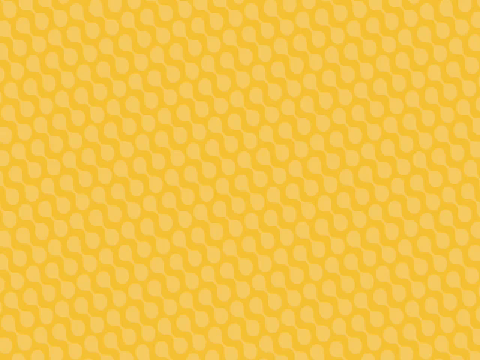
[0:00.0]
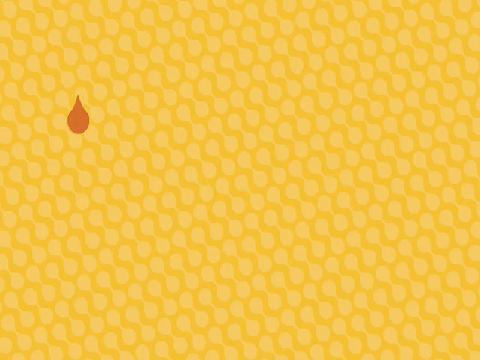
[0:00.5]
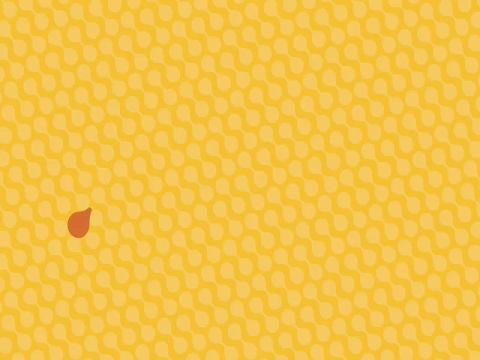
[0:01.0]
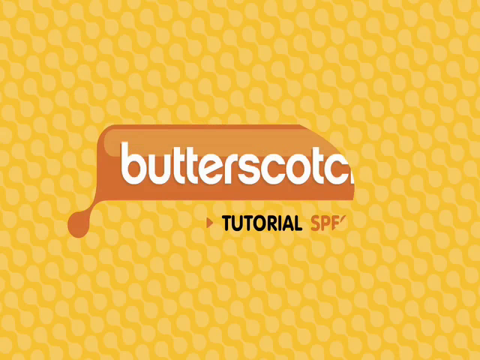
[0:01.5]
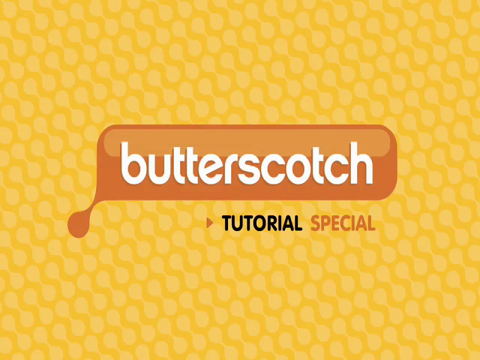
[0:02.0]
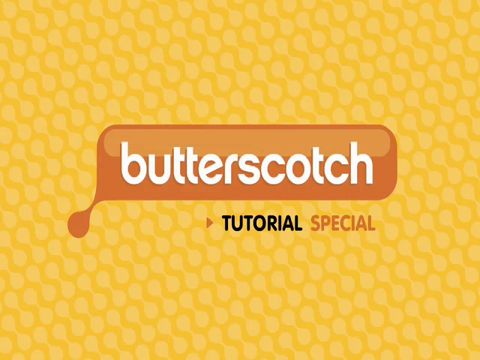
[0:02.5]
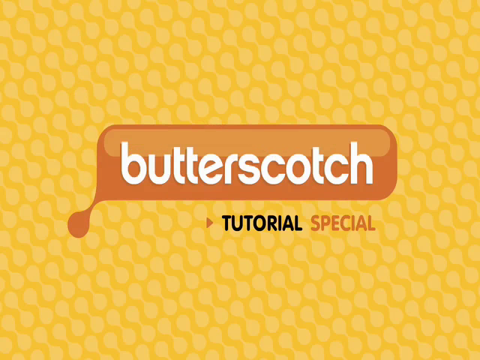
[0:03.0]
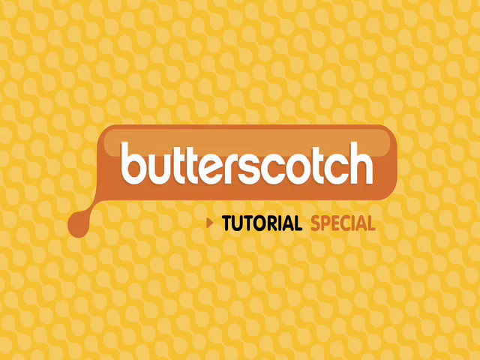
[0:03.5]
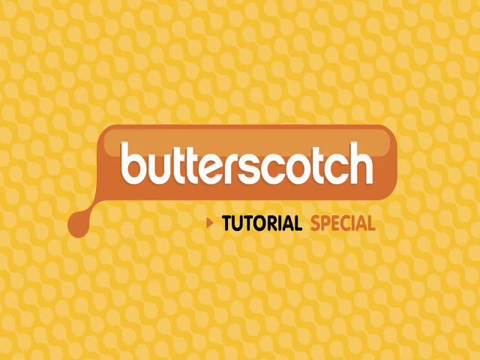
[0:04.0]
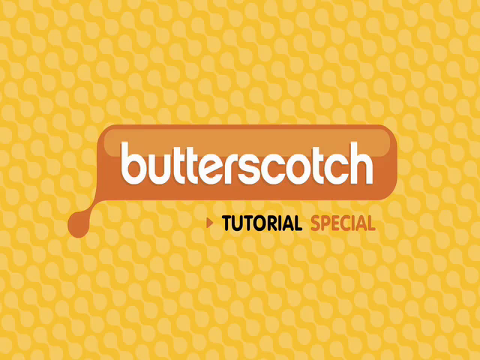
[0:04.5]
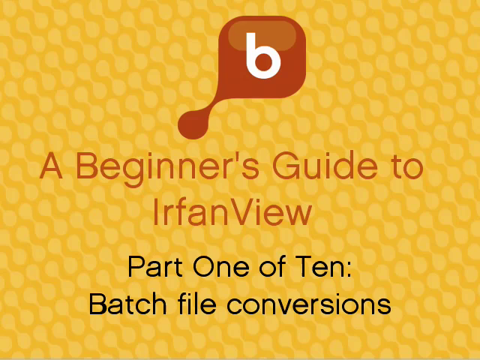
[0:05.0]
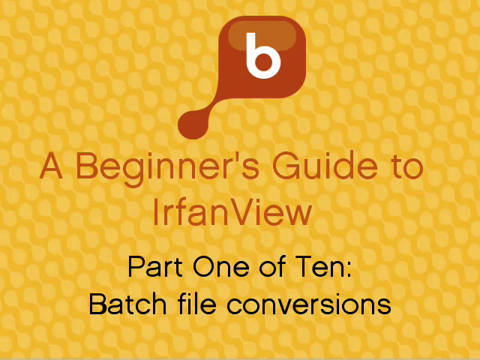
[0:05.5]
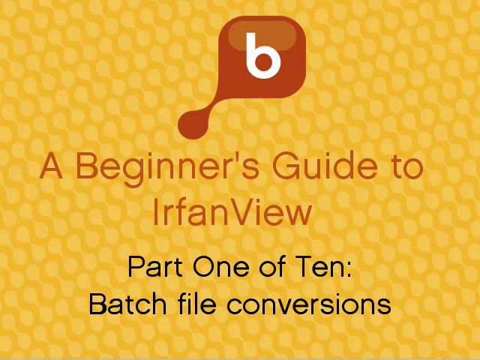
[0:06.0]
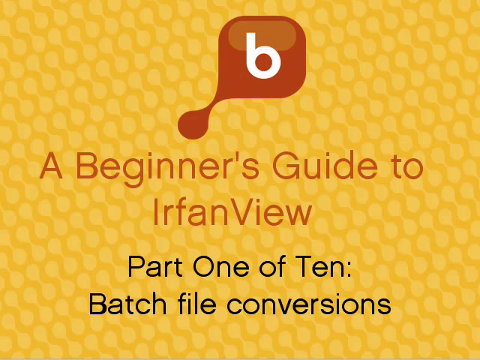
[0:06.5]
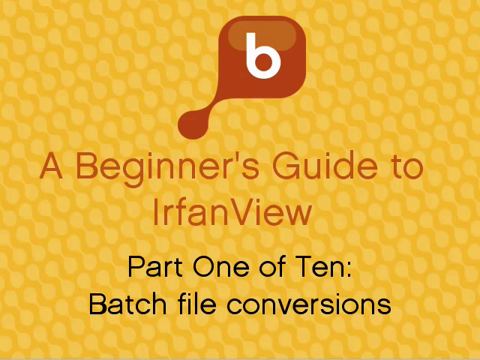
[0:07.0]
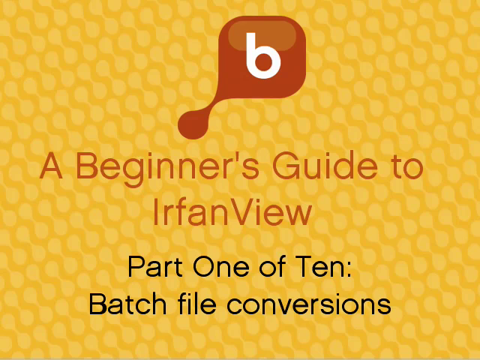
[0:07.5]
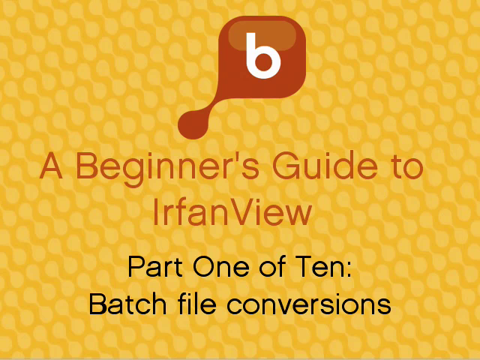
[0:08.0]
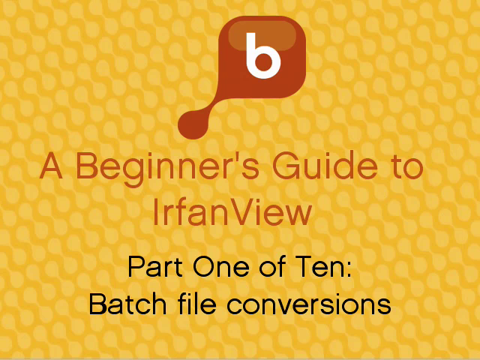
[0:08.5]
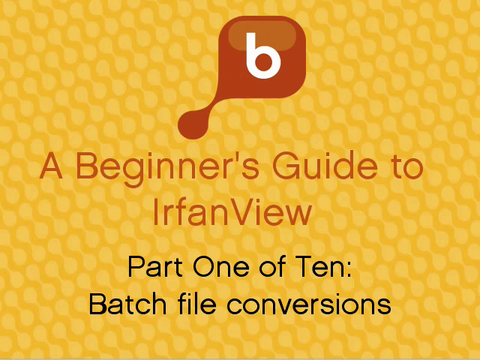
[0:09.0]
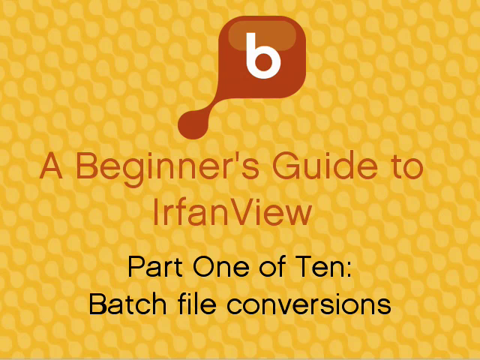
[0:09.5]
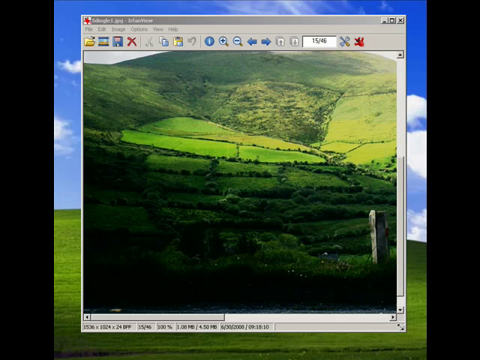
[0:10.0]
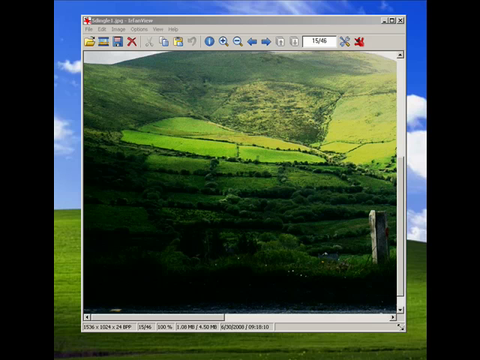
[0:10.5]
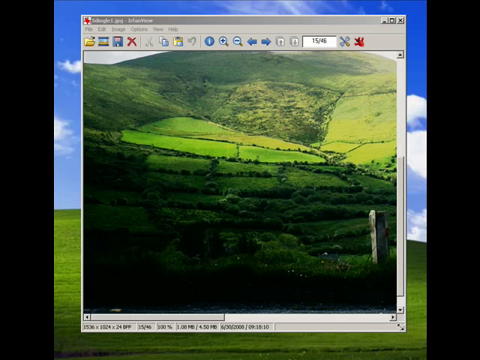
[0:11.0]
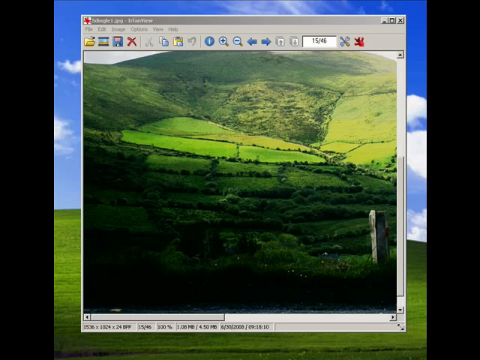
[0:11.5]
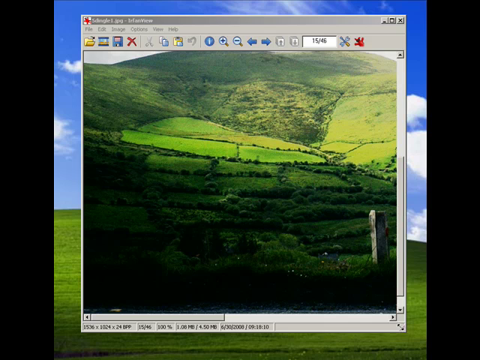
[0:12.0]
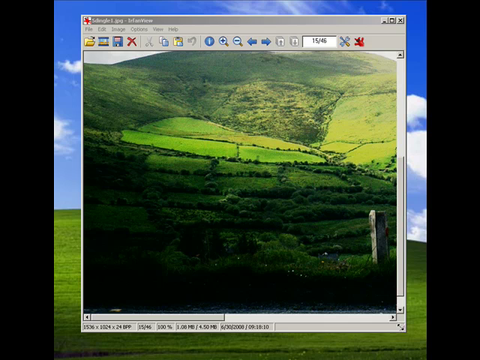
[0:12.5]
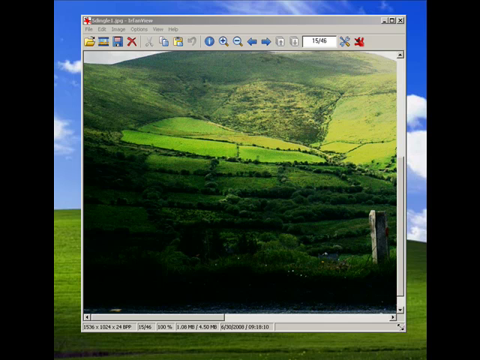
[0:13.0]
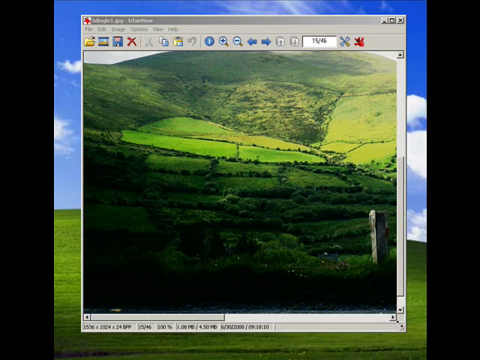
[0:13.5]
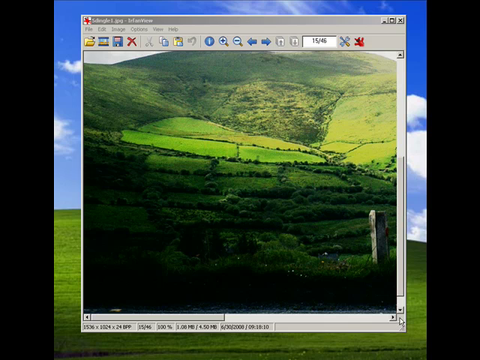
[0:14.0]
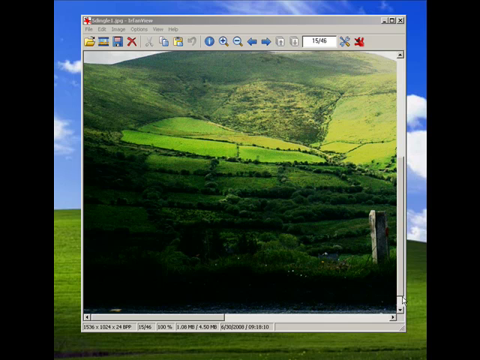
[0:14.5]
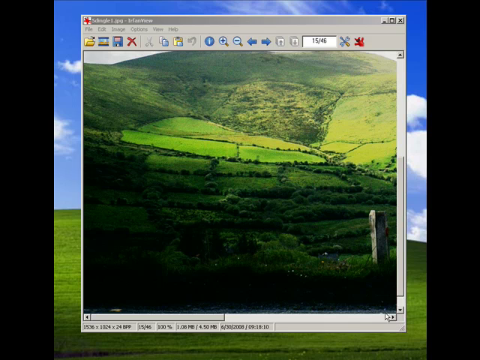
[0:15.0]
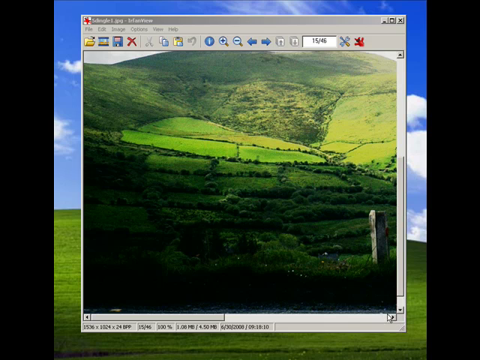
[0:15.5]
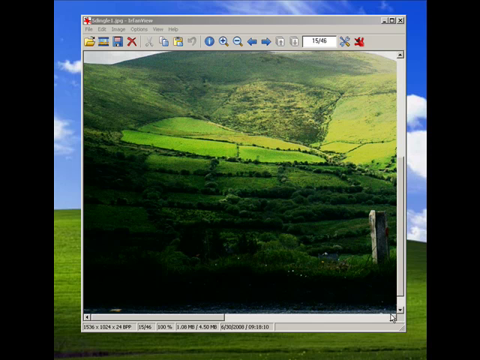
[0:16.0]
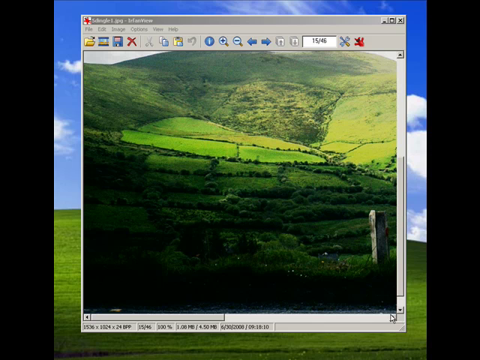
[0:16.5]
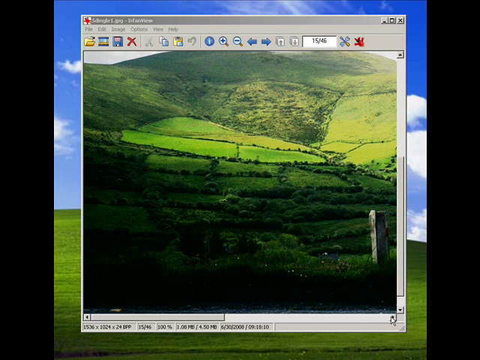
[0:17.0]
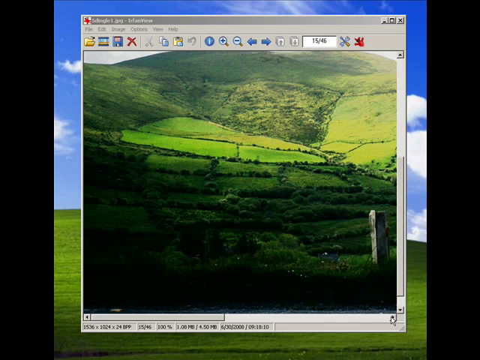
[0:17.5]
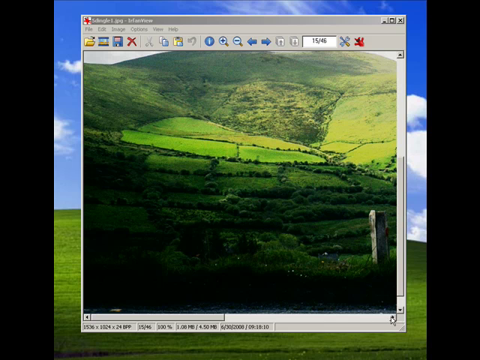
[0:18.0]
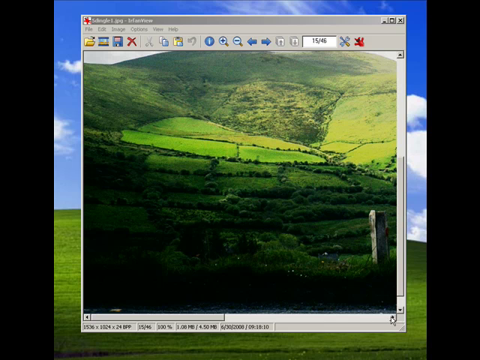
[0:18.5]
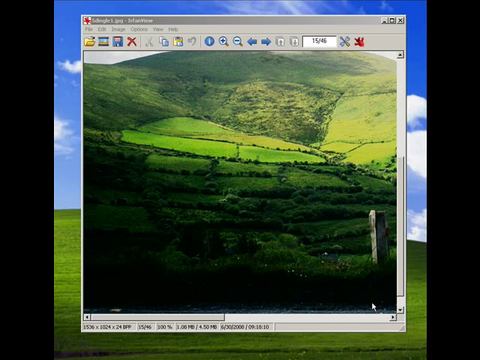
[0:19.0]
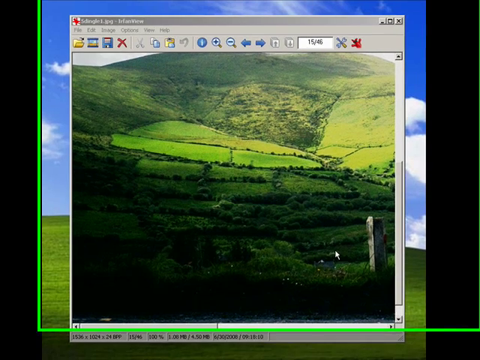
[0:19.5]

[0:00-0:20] The video opens on a title card with a bright yellow backdrop. A butterscotch-colored text box appears that says "butterscotch," and below it the text reads "Tutorial Special." This changes to read "A Beginner's Guide to IrfanView, Part One of Ten, Batch file Conversions." Above this is a logo that looks like a b inside a brown square with rounded edges, one side pulled so it appears to be dripping off. The screen fades to an open computer screen showing a photograph that looks like part of a video game: rolling green hills with rectangles of land separated by trees and bushes. In the lower right of the screen is what looks like a giant rock formation like Stonehenge, but a single large stone block.